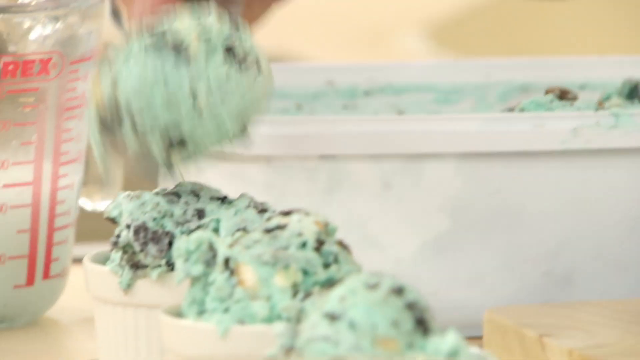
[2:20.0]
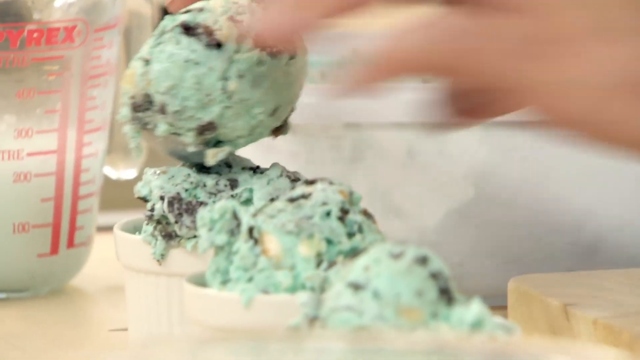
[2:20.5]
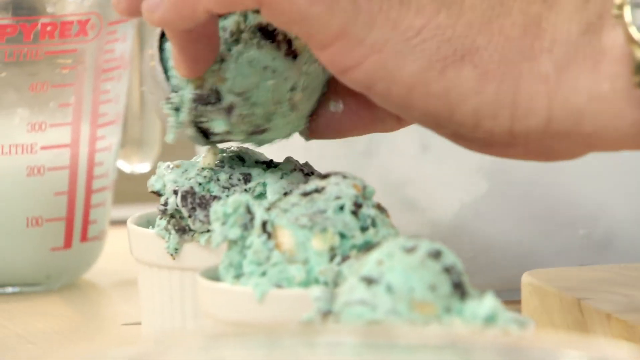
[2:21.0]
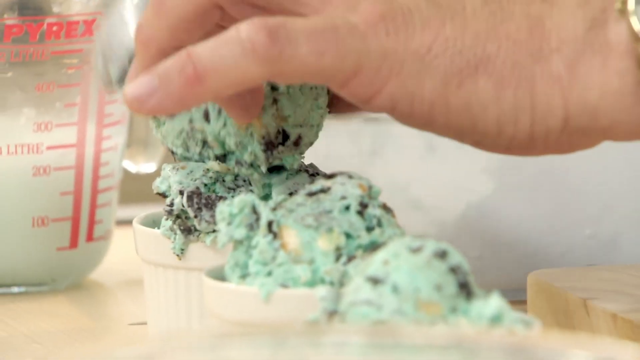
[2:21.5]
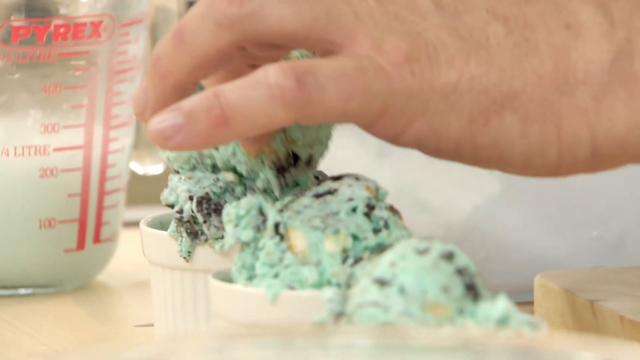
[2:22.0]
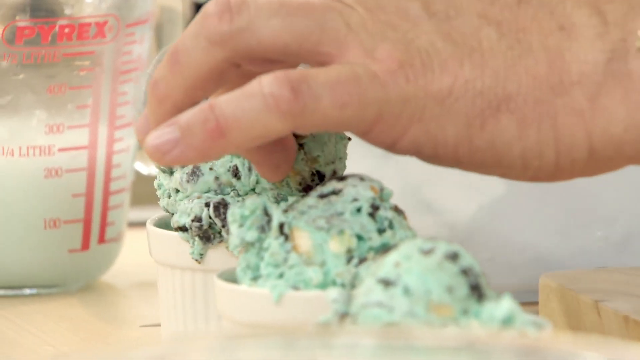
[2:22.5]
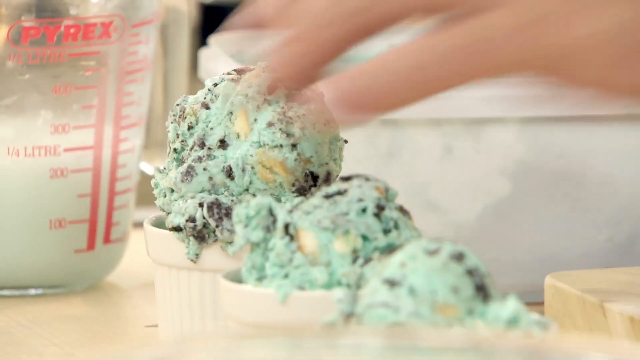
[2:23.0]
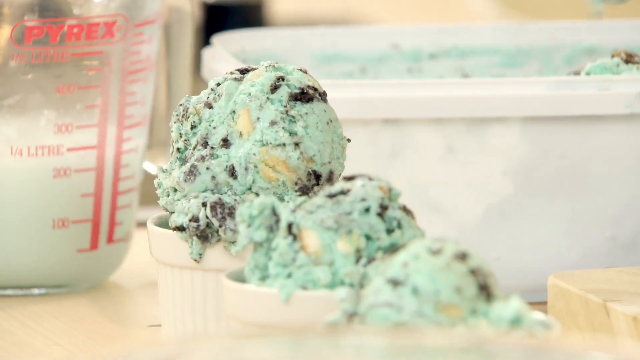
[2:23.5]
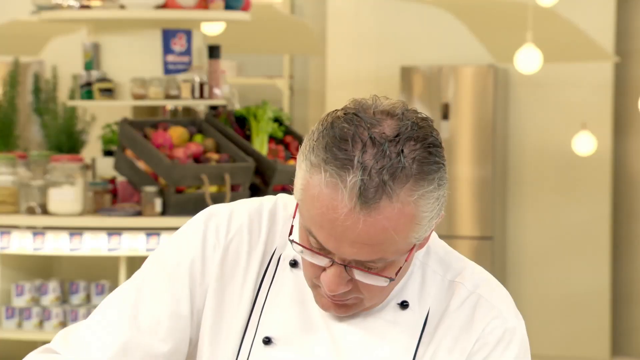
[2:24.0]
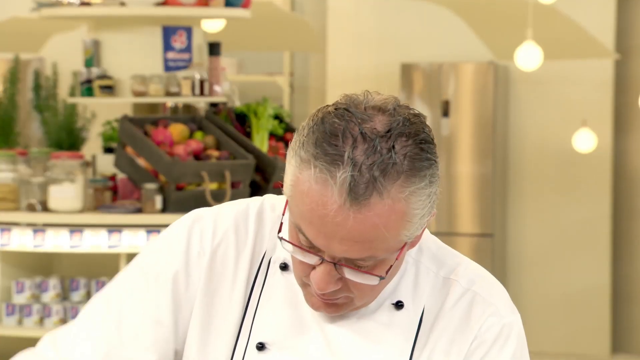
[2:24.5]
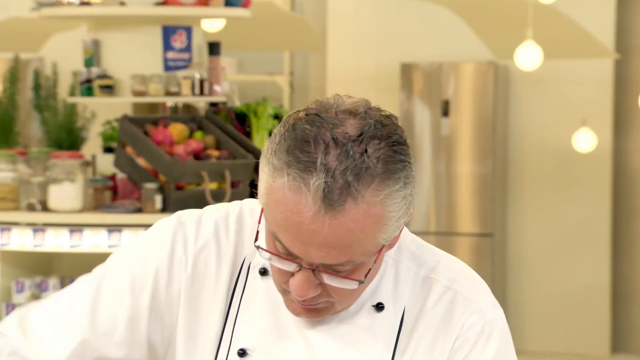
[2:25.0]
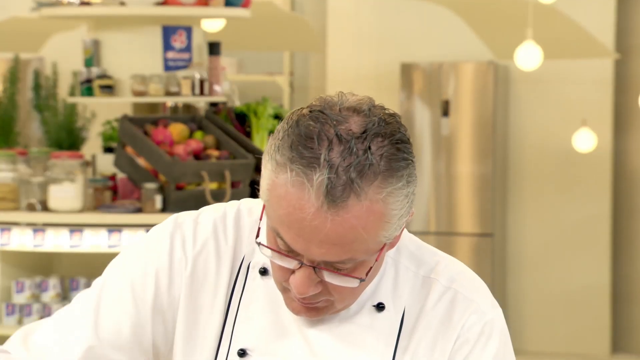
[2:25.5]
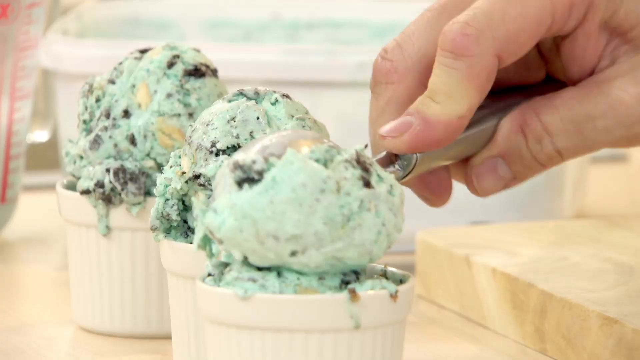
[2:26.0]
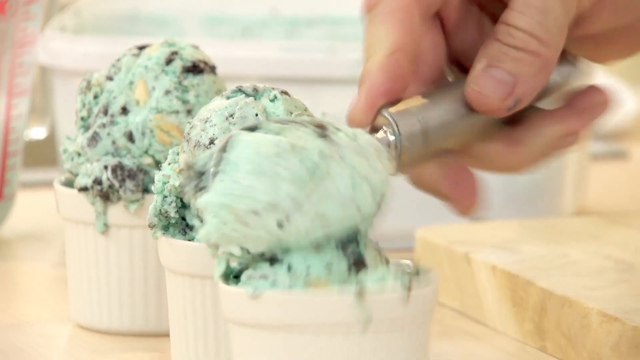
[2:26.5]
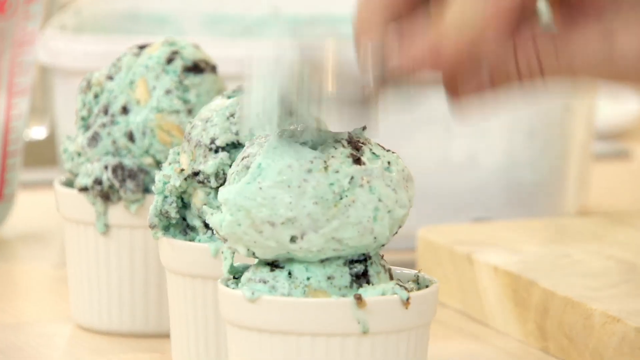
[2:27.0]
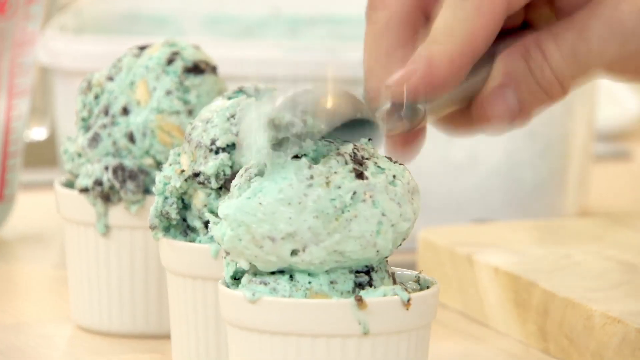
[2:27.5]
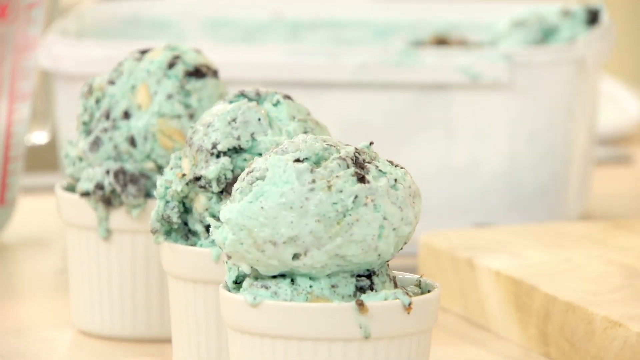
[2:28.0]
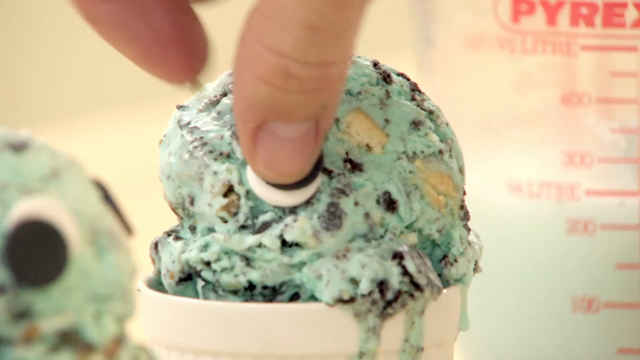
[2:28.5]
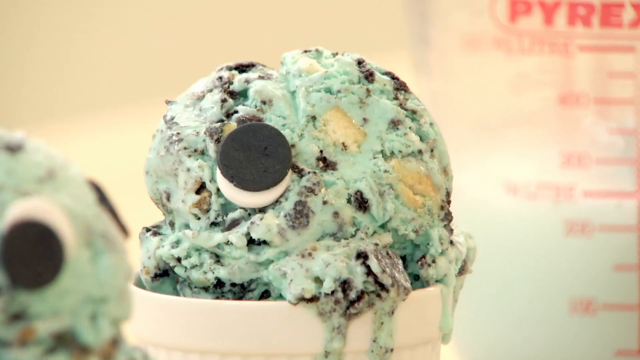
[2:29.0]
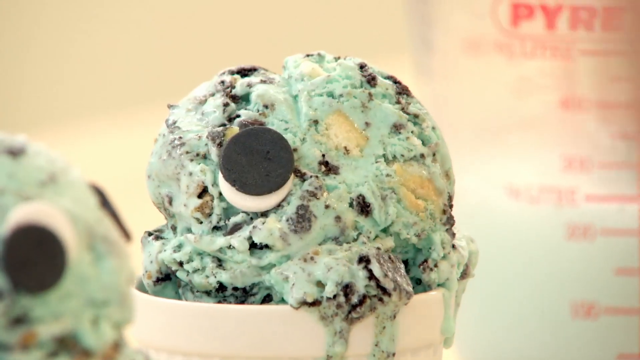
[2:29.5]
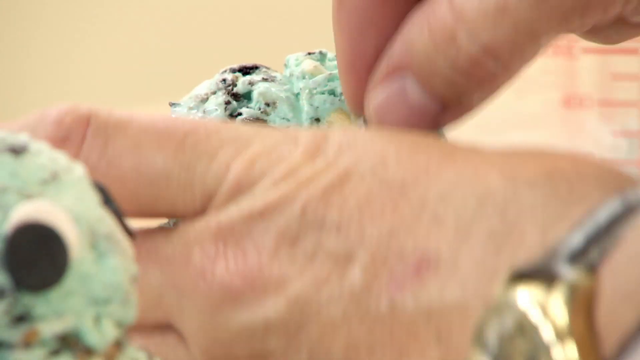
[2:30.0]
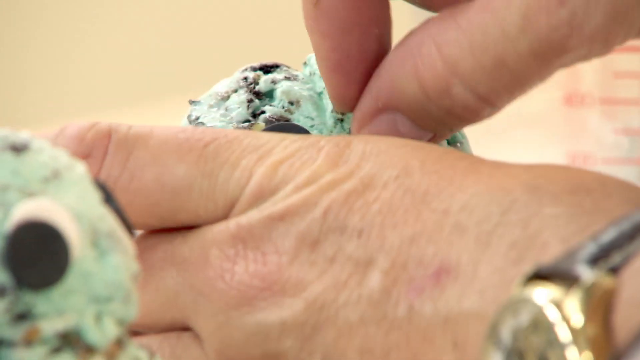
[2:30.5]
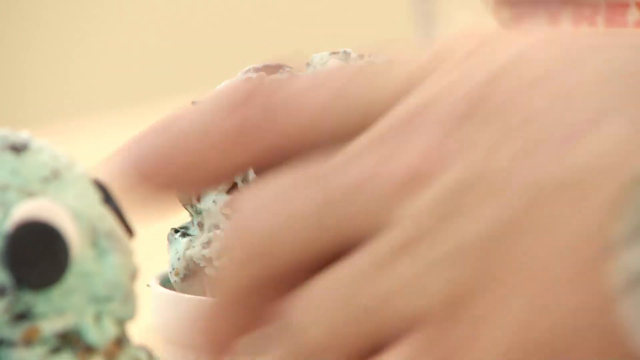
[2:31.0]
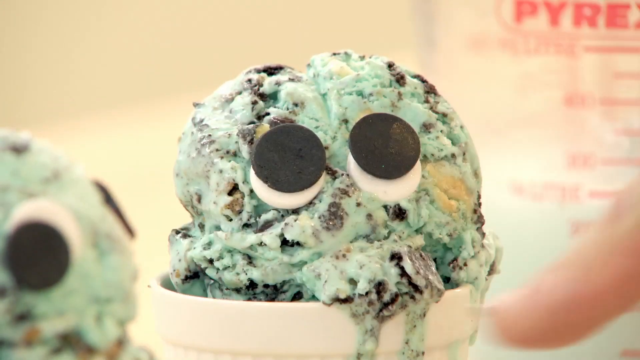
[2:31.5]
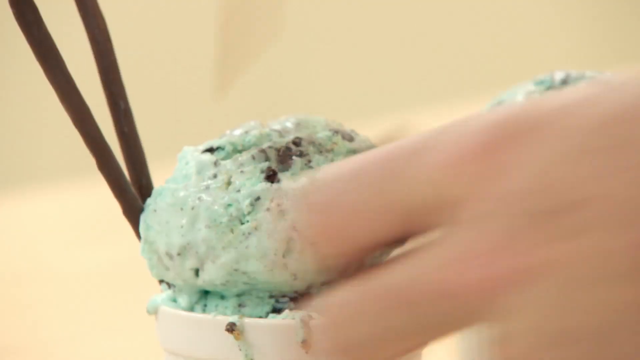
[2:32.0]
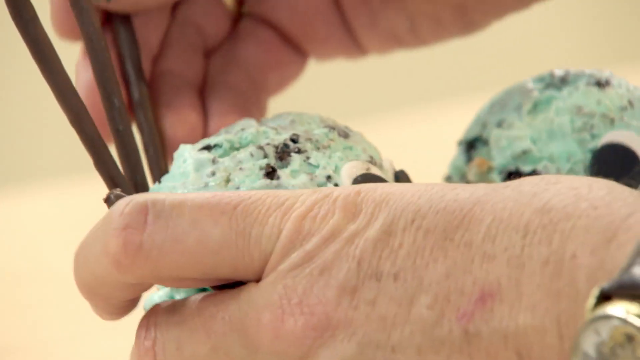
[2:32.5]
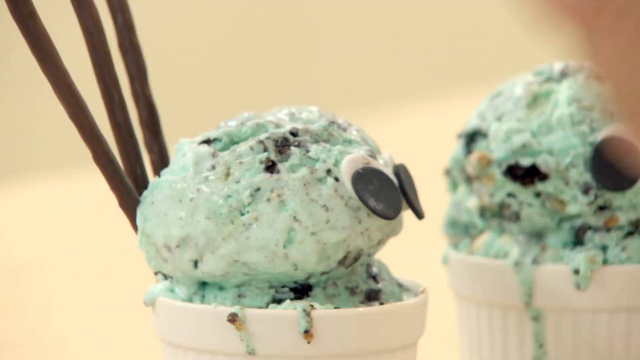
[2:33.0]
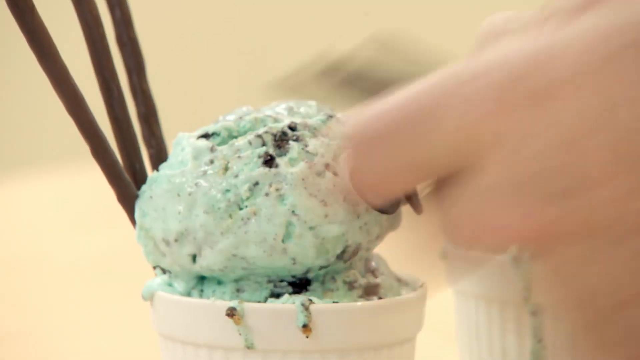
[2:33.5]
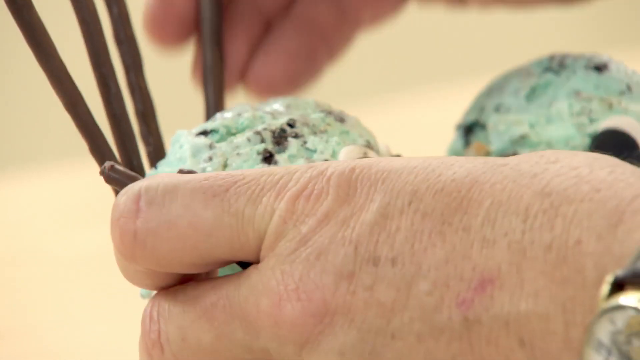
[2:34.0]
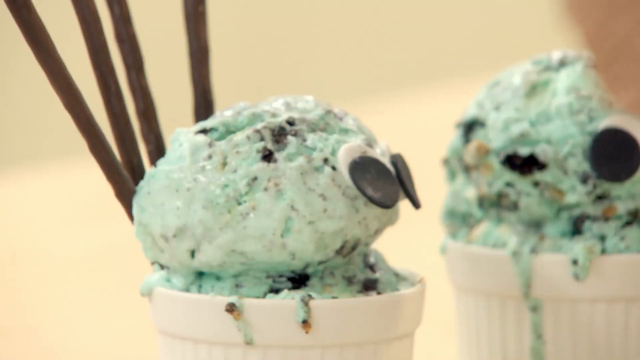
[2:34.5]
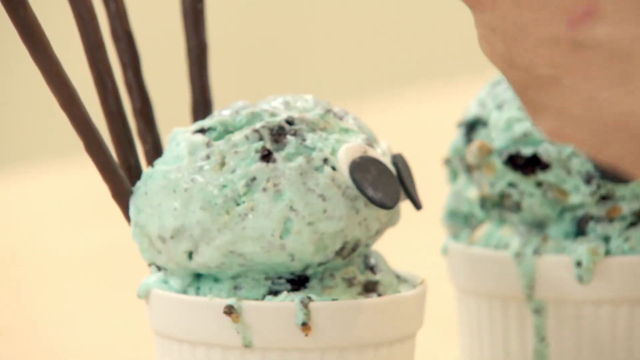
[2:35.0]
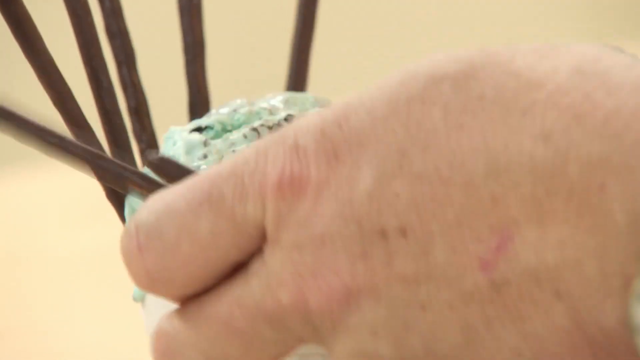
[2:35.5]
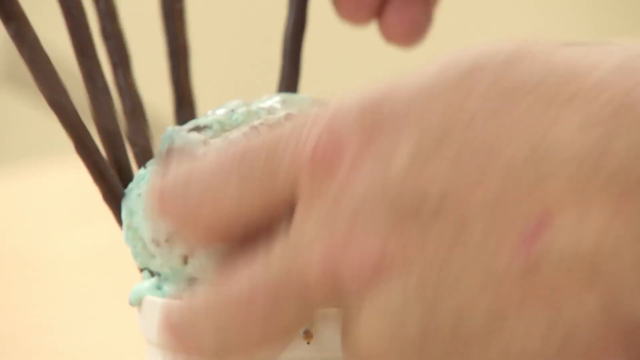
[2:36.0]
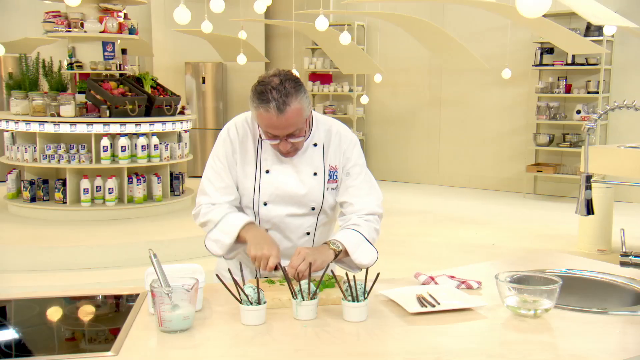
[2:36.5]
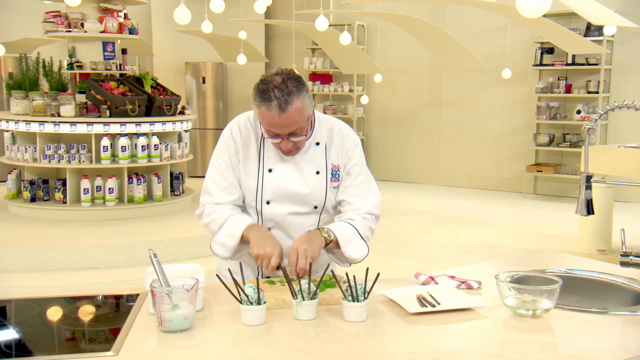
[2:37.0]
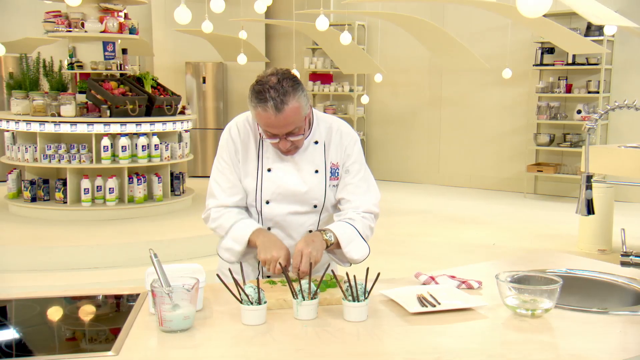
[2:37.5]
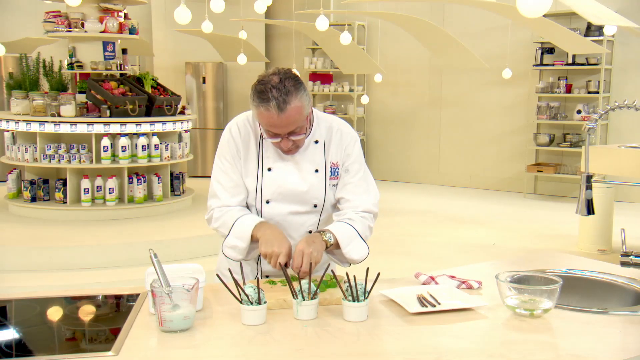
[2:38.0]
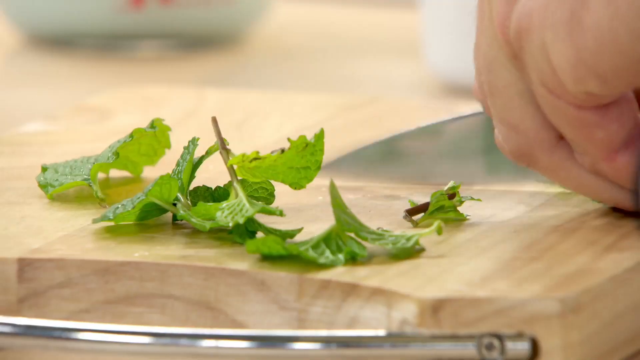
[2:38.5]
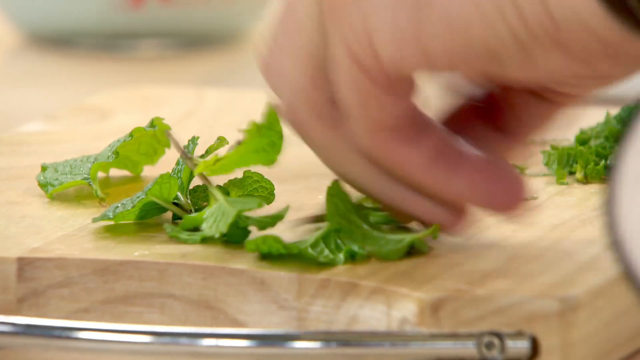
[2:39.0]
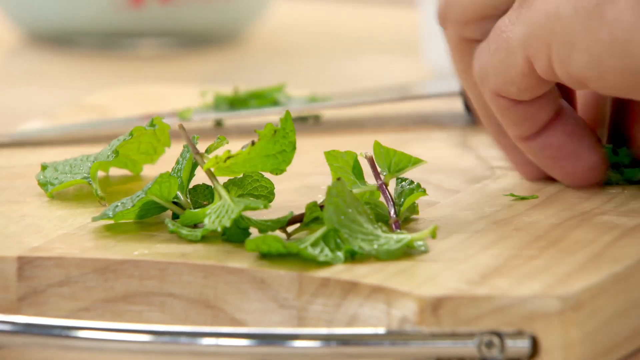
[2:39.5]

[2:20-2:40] A close-up shows small white bowls of green mint ice cream with small brown cookie chunks, with a Pyrex measuring cup behind them that apparently holds milk, as a hand scoops ice cream onto one of the bowls. The chef is seen from the shoulders up, looking down, his hair appearing to be thinning a little, as he continues scooping ice cream into the bowls. After another zoom in on the ice cream, he places small black and white circles on it so it looks like it has eyes, then picks up long chocolate sticks and places them behind the ice cream in the bowl. He then chops what look like small green leaves on a cutting board, and the camera zooms in to show they are mint leaves.